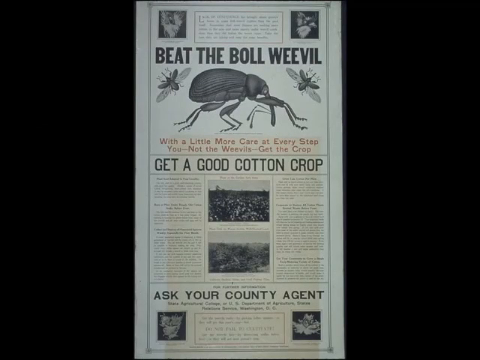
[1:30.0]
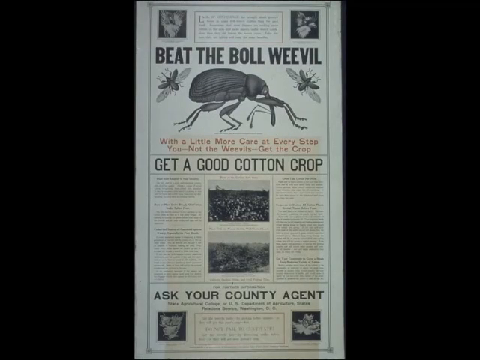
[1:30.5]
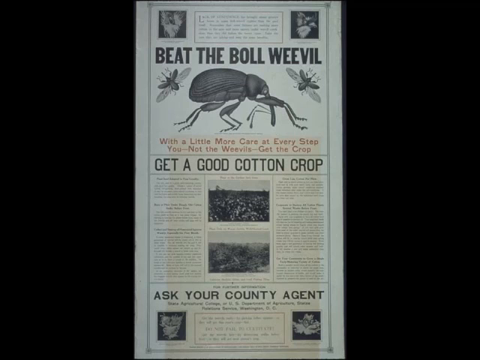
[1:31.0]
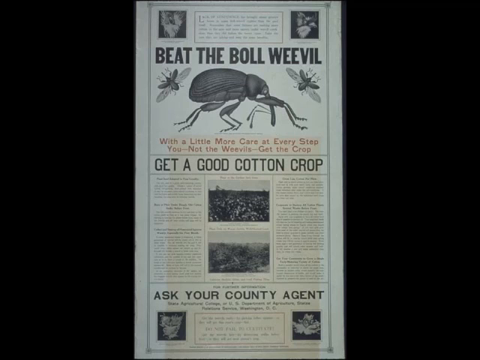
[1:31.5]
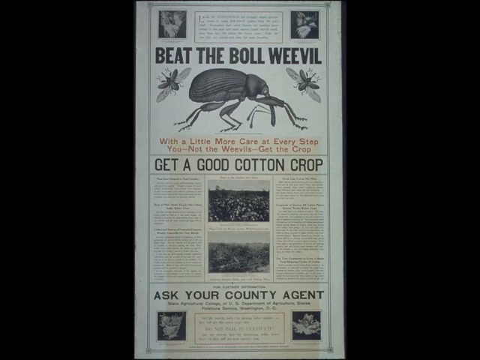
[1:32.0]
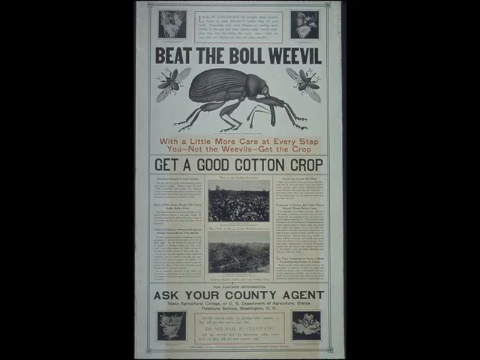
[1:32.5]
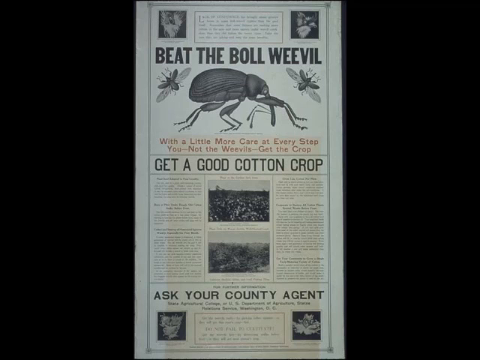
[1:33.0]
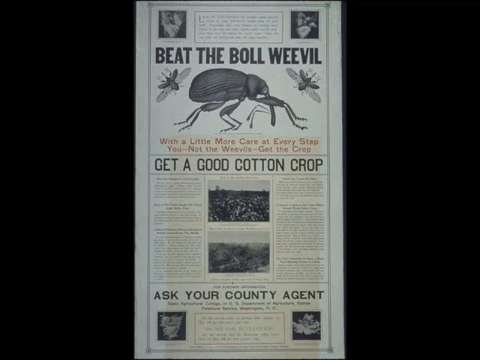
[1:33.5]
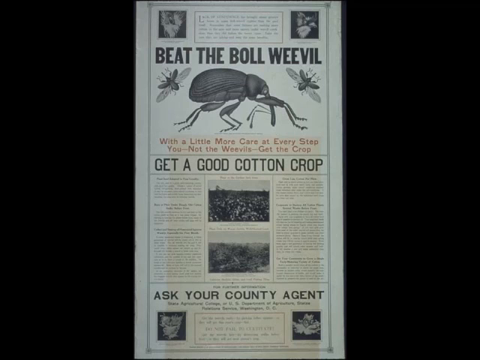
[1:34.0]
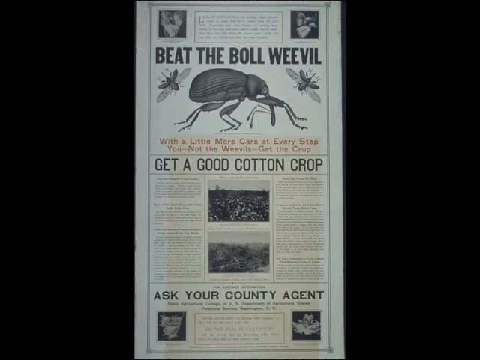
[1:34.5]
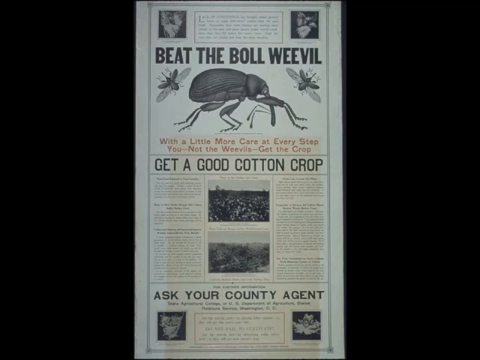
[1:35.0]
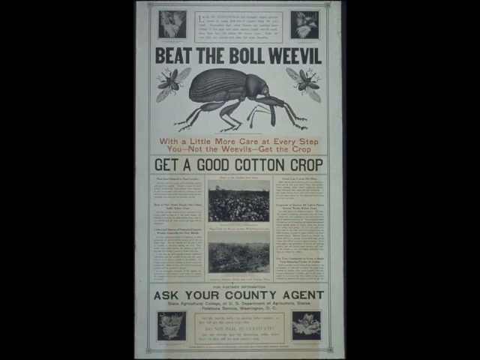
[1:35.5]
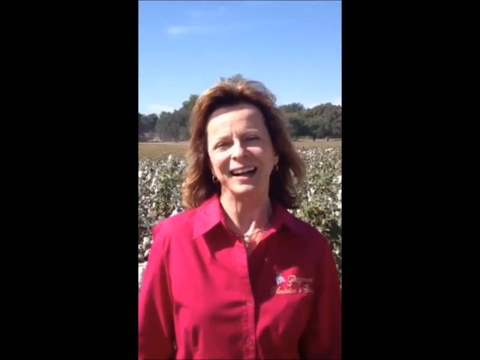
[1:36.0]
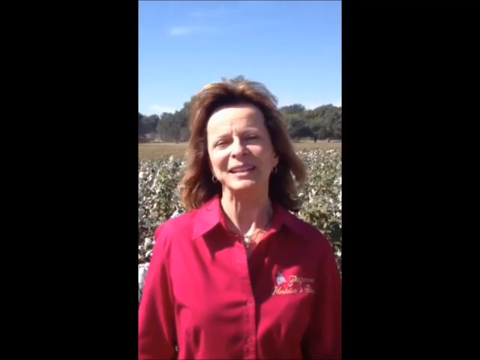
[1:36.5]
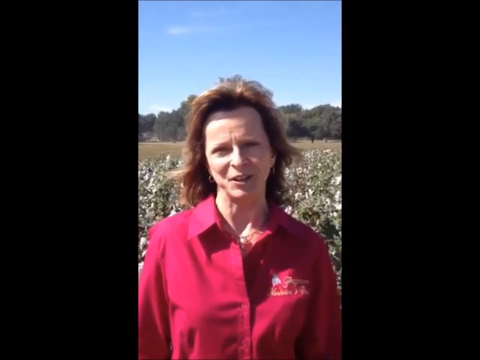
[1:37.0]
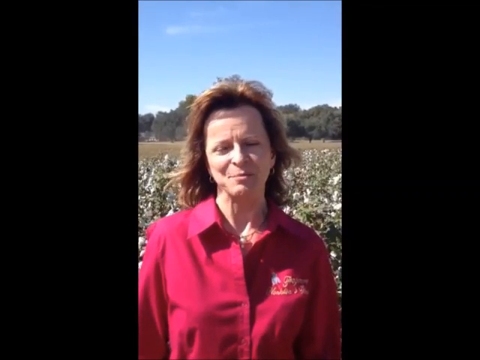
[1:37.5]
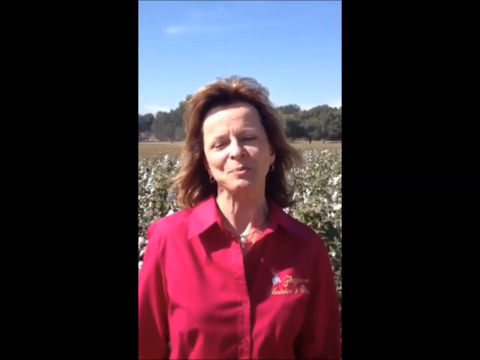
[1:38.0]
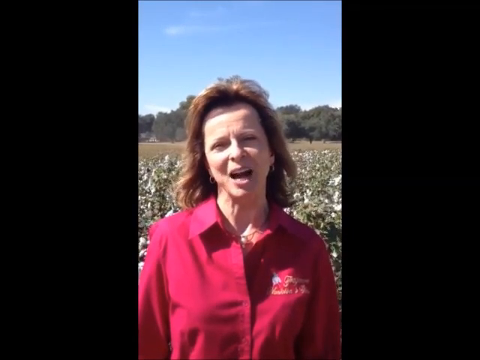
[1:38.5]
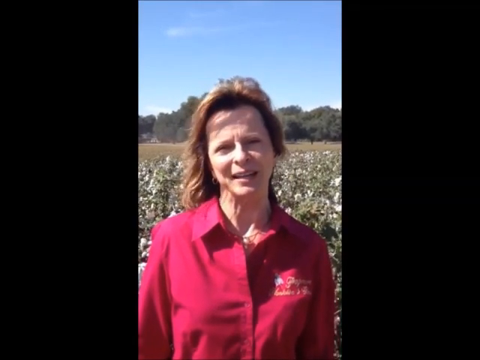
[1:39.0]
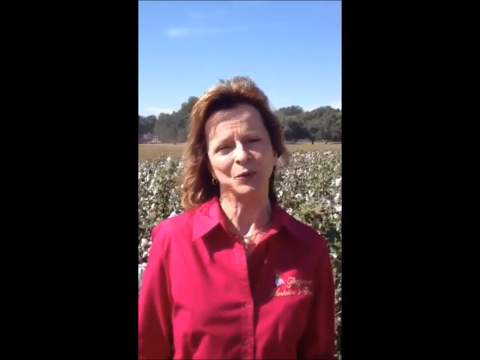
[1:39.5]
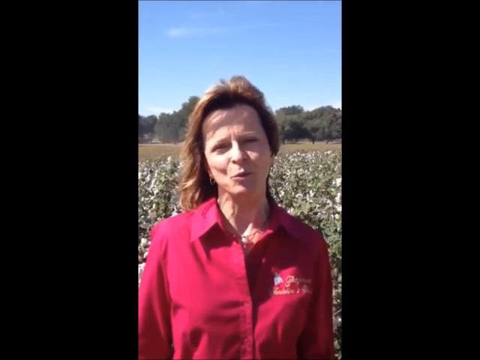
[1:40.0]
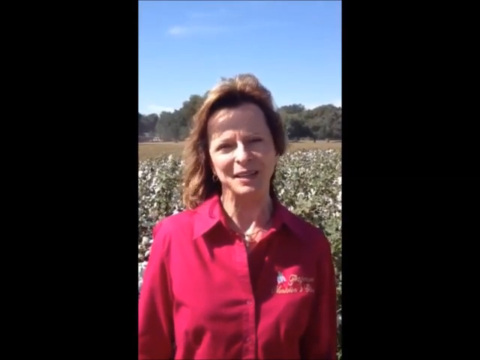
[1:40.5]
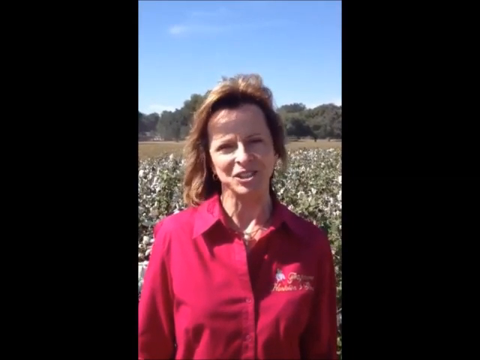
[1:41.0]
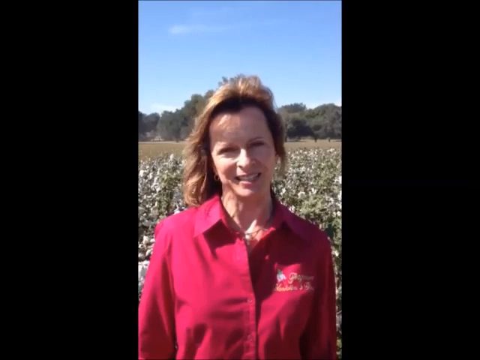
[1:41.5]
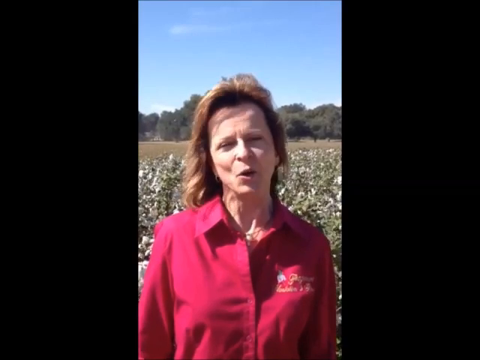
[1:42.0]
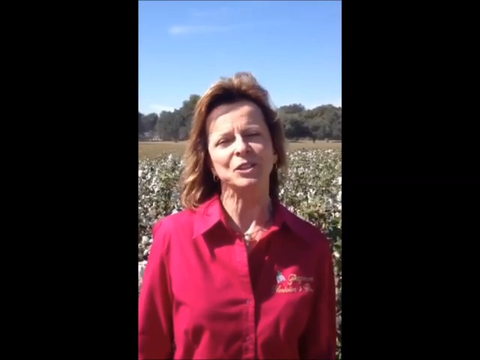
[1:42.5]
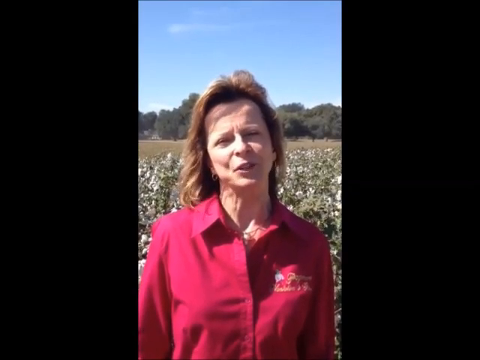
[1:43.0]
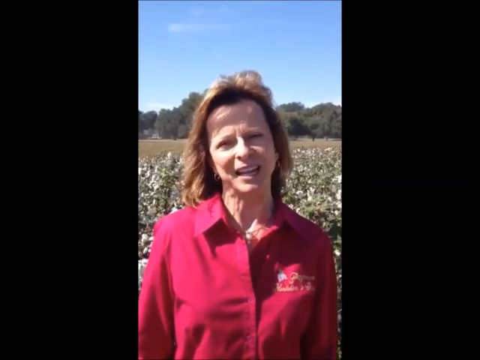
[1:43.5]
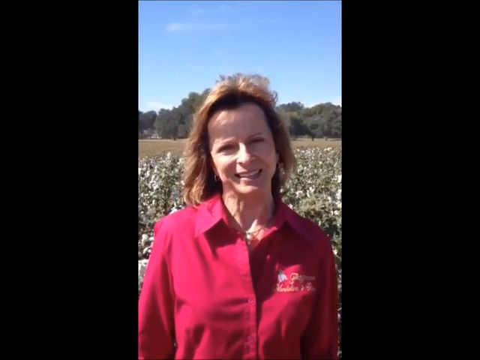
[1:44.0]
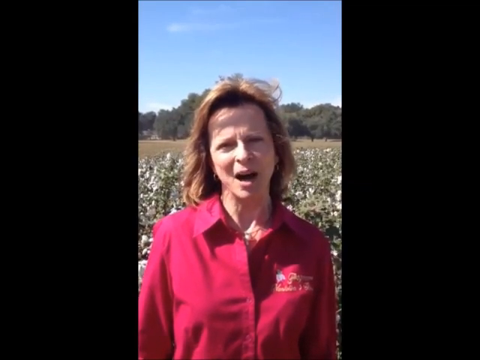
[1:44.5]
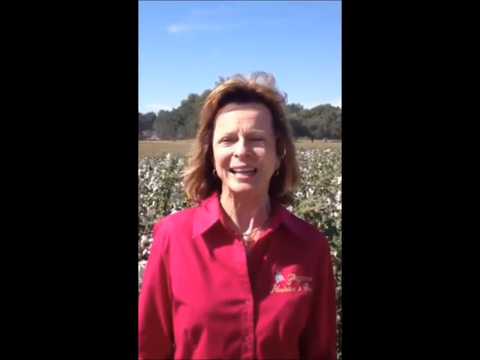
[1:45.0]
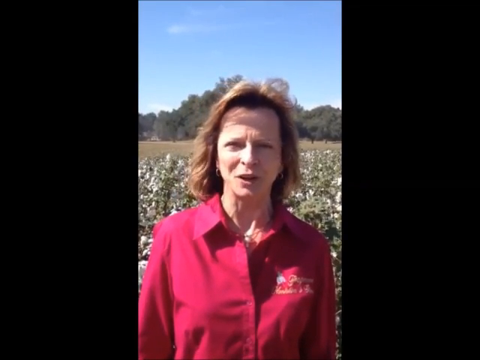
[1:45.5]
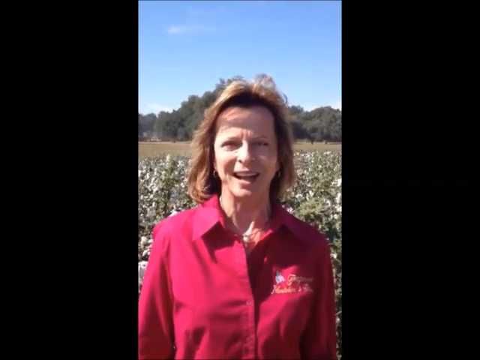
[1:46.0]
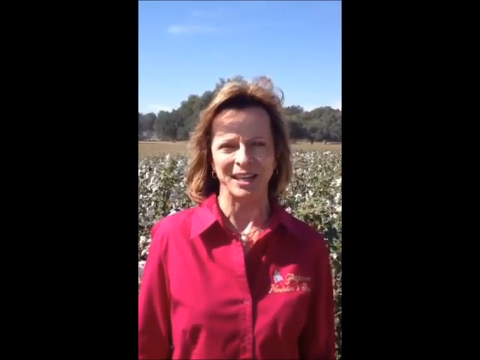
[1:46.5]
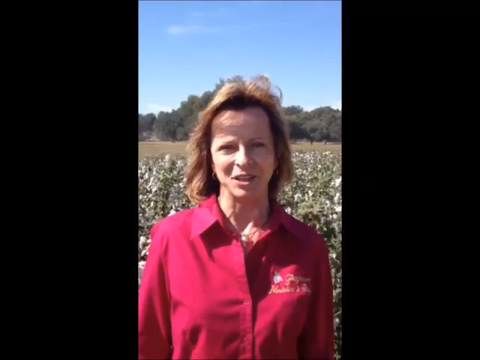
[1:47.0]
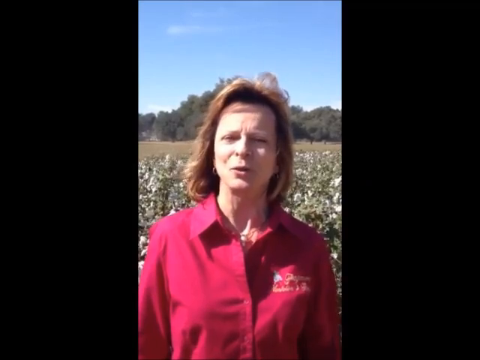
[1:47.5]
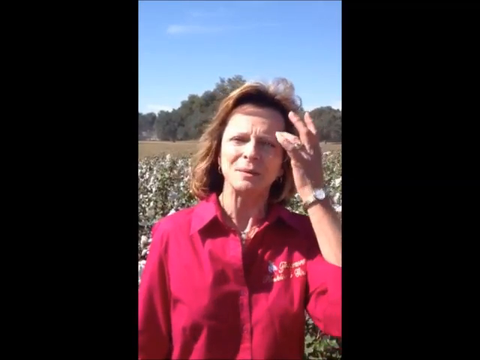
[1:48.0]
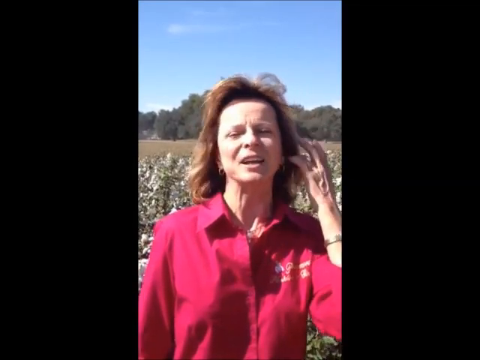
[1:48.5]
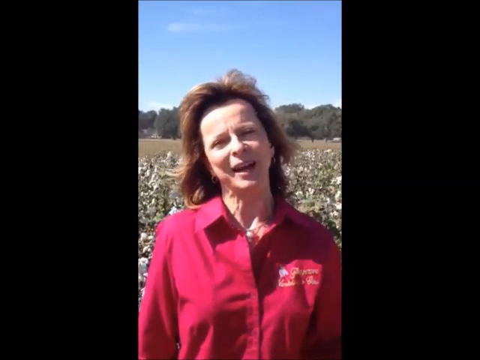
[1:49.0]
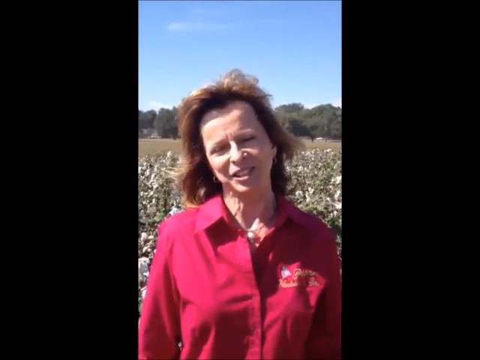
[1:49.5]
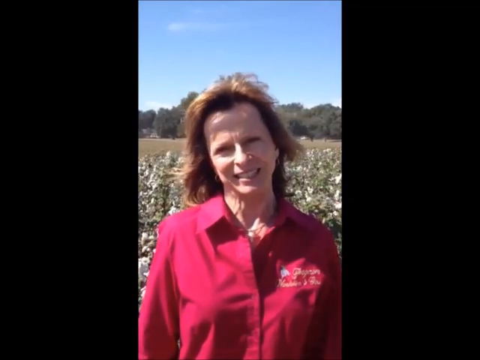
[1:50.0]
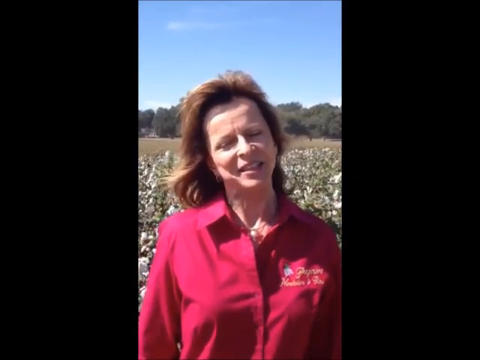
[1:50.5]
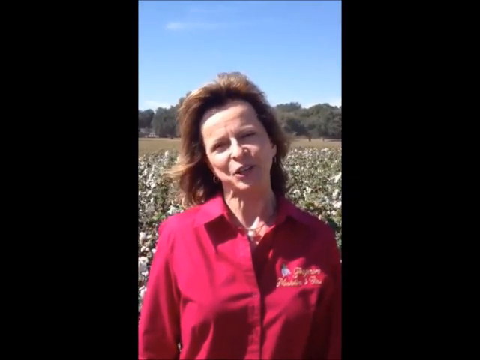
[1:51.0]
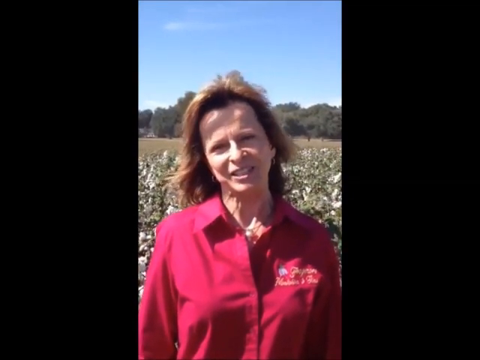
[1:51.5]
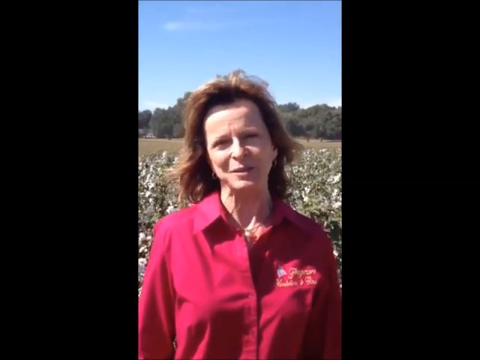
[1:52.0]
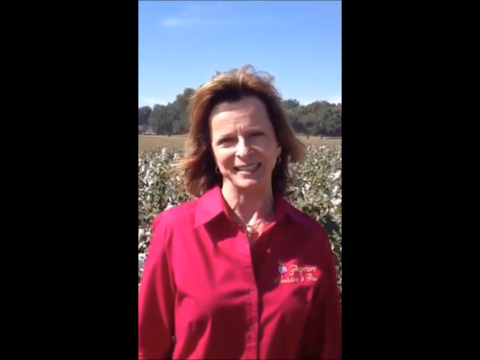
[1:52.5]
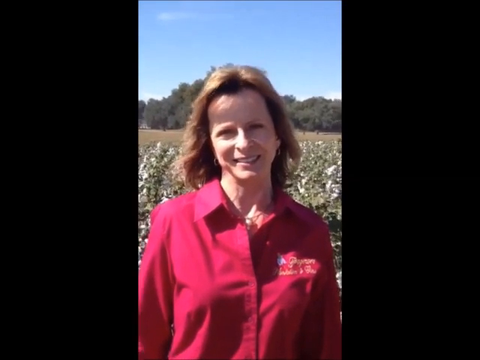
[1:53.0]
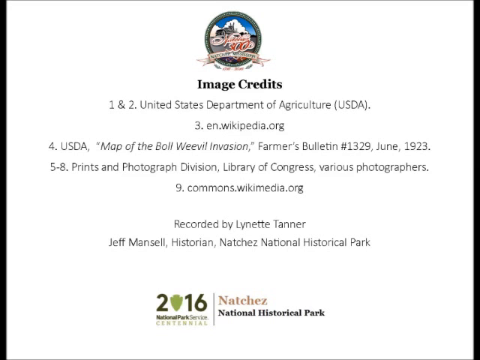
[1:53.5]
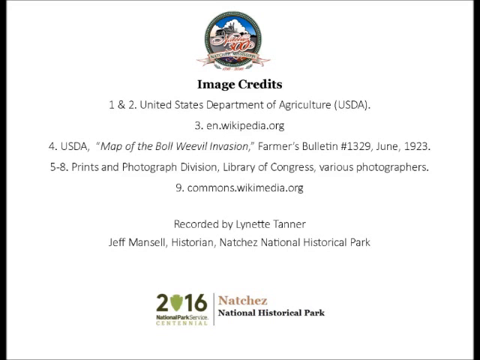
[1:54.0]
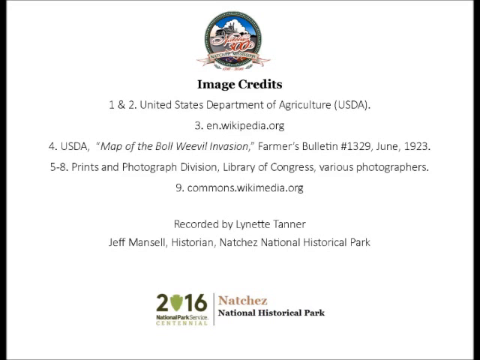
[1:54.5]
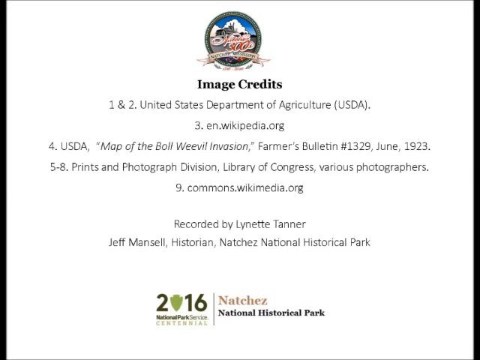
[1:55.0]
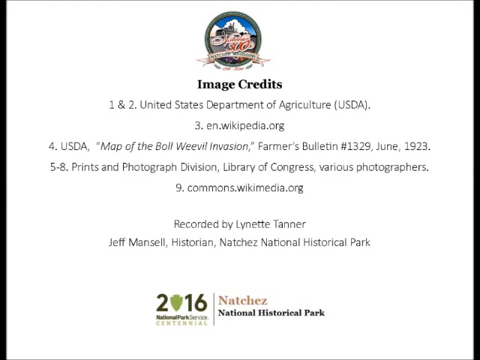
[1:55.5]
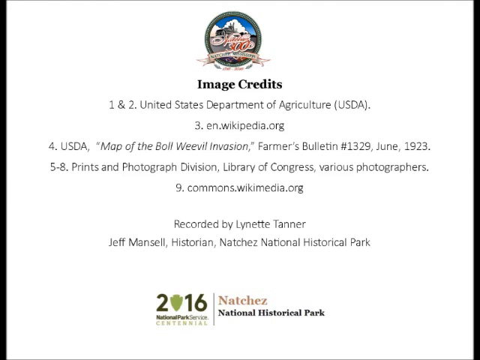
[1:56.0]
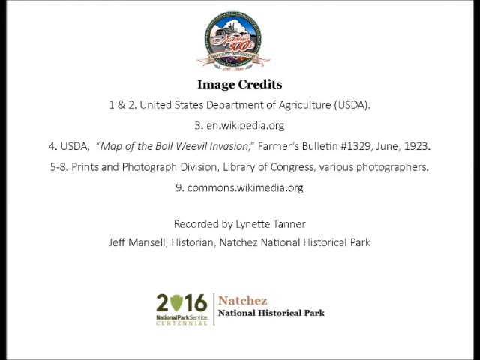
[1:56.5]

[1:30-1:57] An article fills the center between black bars on the left and right. Small pictures in the top left and top right corners are impossible to make out, and a small rectangle between them contains some text. Below that, big bold black letters say "beat the boll weevil," with a picture of the bug in the center on the ground, head facing to the right, and two more flying, one to the top left and one to the top right. Below that is another article, "get a good cotton crop," and toward the bottom another one says "ask your county agent." The video cuts to a woman standing in front of a big field with trees in the far background and a bright blue sky. She wears a red button-up shirt with a logo and some writing above the right chest area. Her red hair falls just past her neck and blows in the wind, and her head is slightly tilted to the left as she talks. She appears to be probably about 50, with her arms straight down at her sides. Leaves blow a little behind her; over her right shoulder one plant is blowing pretty hard, and her hair blows to the left. She moves her hand up to her face and scrapes a finger beside her eye to pull the hair out of her face, her head still slightly tilted to the left. The video then cuts to an all-white background with the logo seen earlier at the top center. Below it, "image credits" appears in dark black, followed by about five lines of text, then "recorded by Lynette Tanner," and another person is listed. At the bottom it says "2016" and "National Historical Park, Natchez."